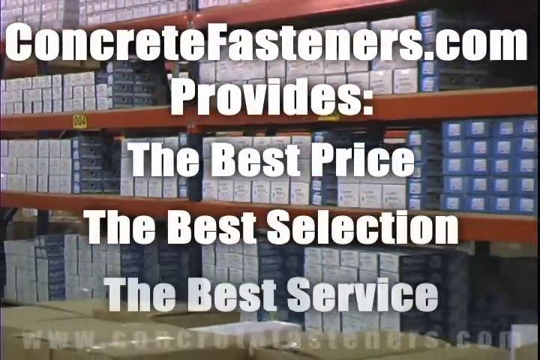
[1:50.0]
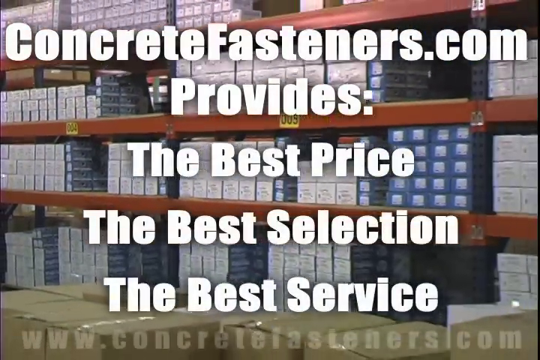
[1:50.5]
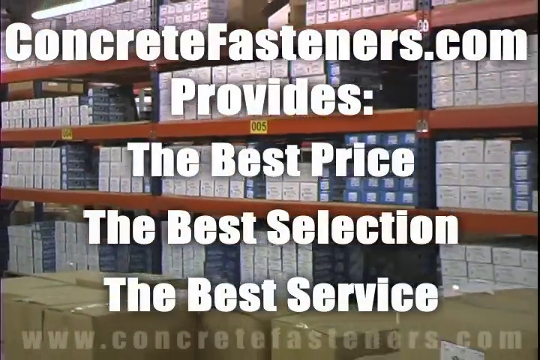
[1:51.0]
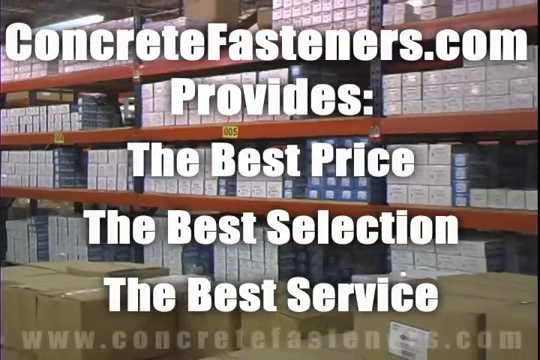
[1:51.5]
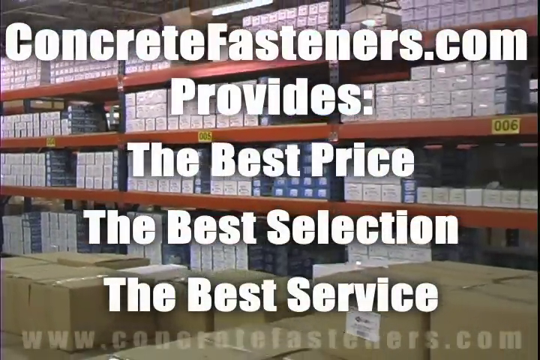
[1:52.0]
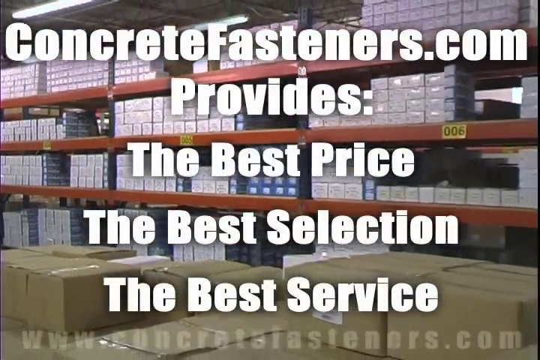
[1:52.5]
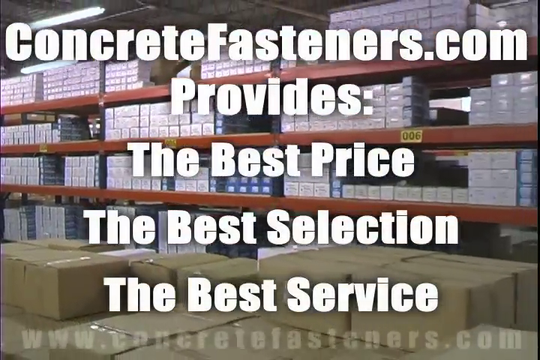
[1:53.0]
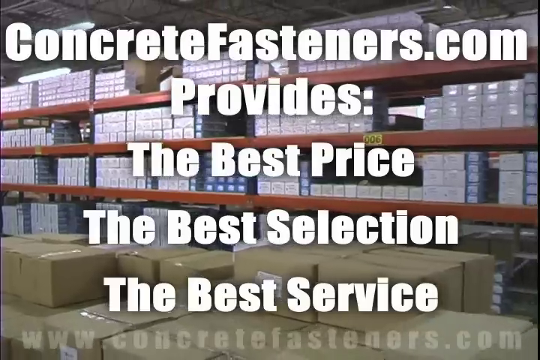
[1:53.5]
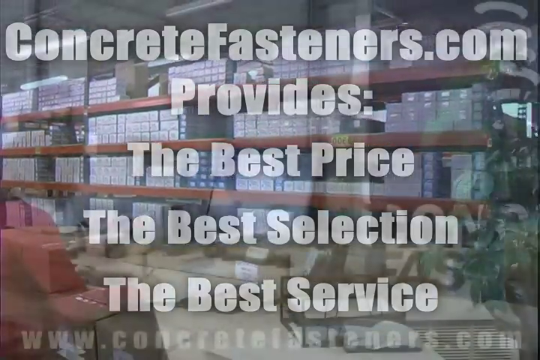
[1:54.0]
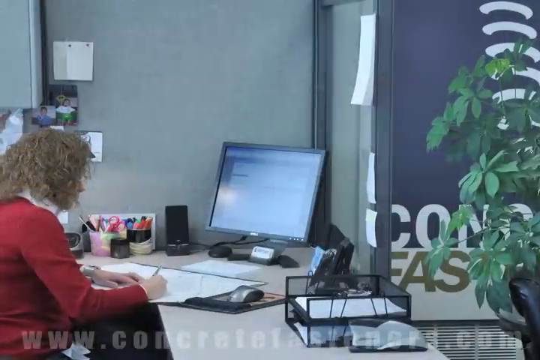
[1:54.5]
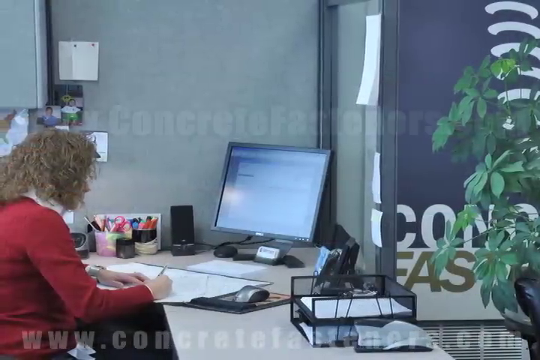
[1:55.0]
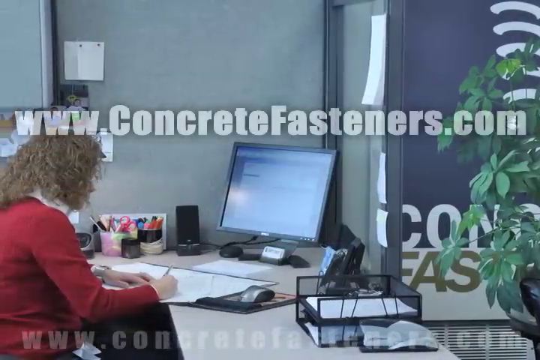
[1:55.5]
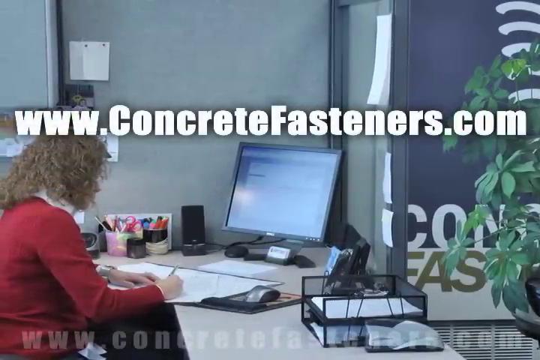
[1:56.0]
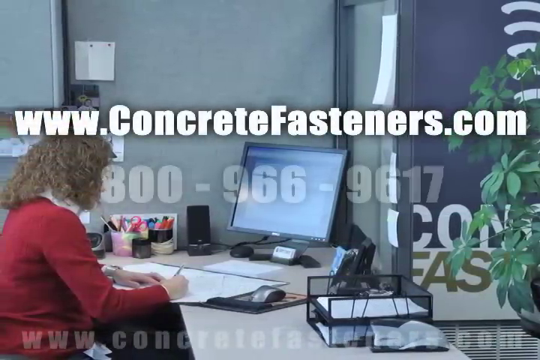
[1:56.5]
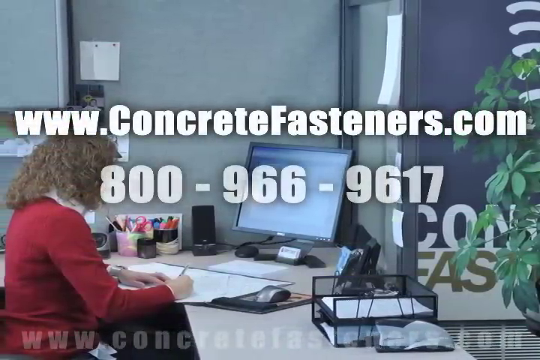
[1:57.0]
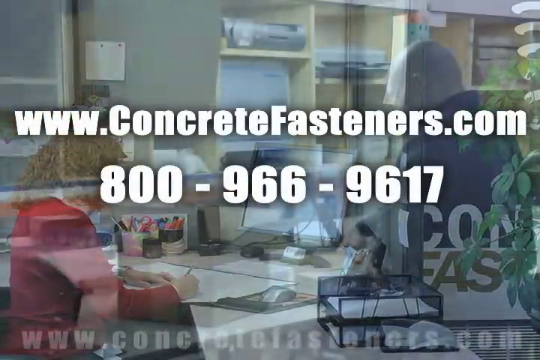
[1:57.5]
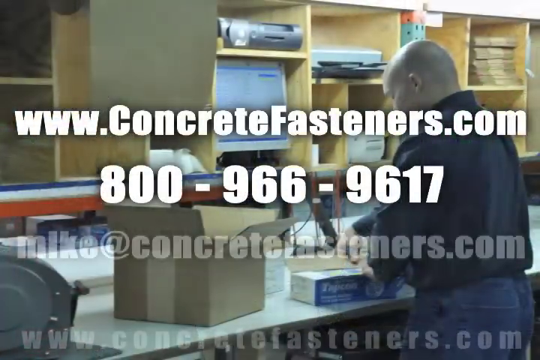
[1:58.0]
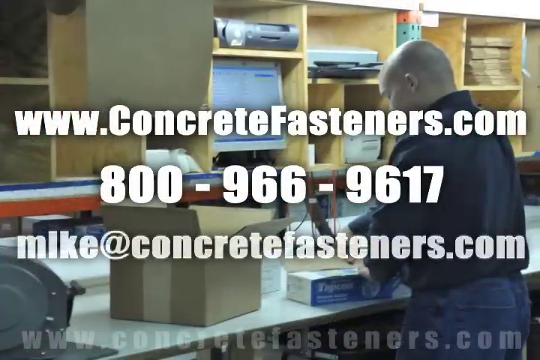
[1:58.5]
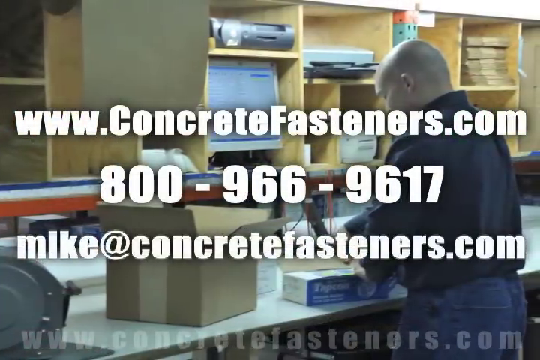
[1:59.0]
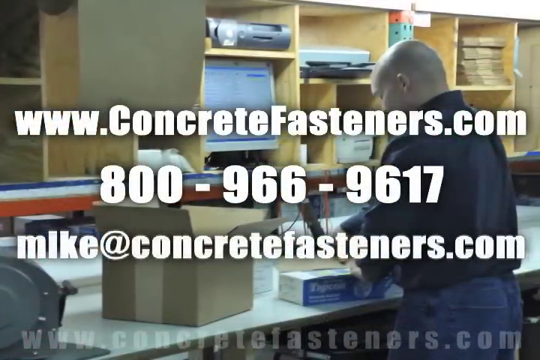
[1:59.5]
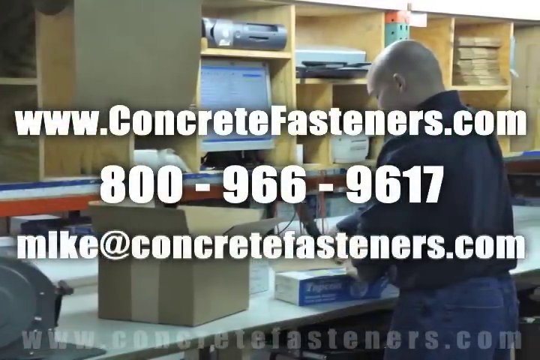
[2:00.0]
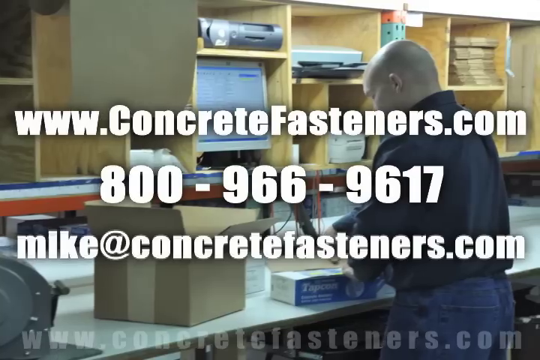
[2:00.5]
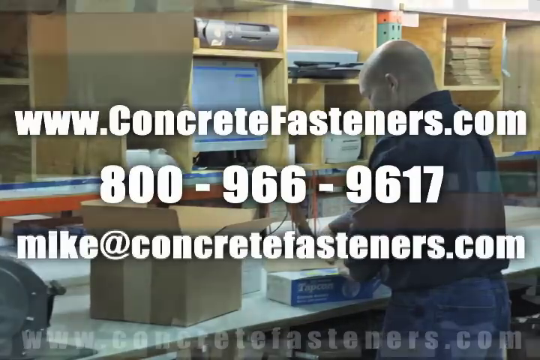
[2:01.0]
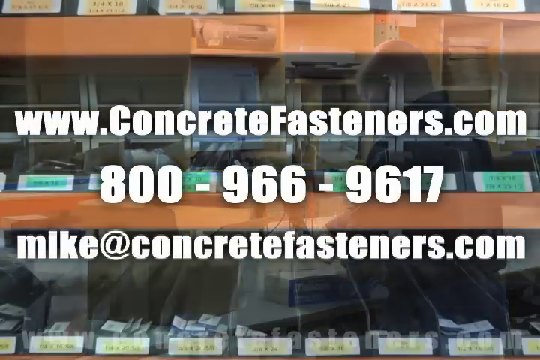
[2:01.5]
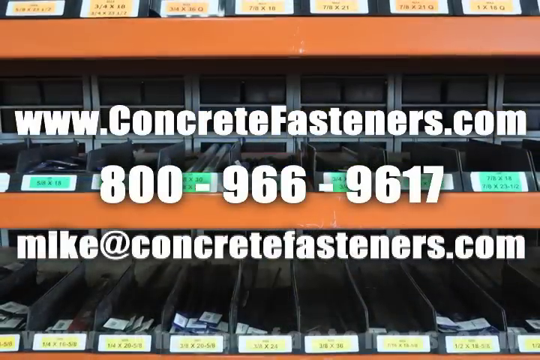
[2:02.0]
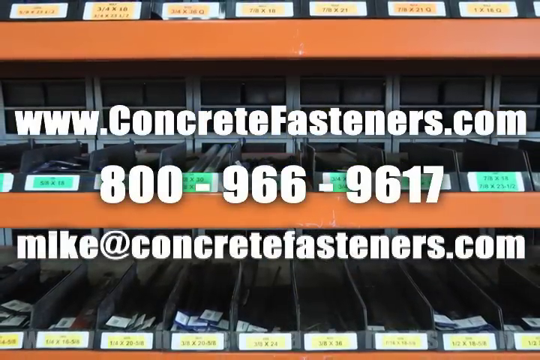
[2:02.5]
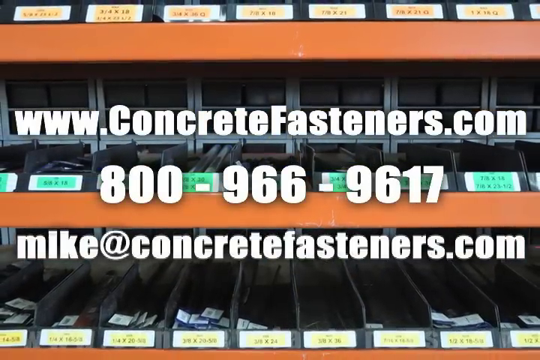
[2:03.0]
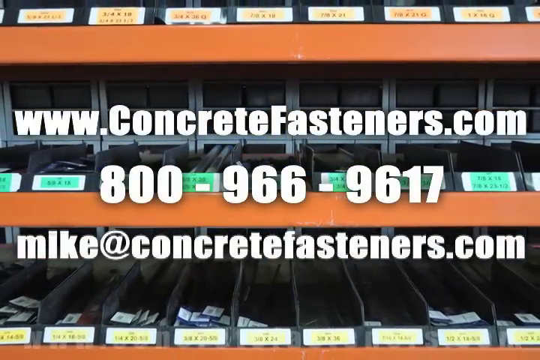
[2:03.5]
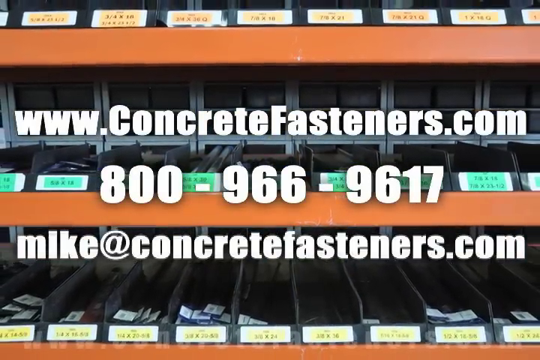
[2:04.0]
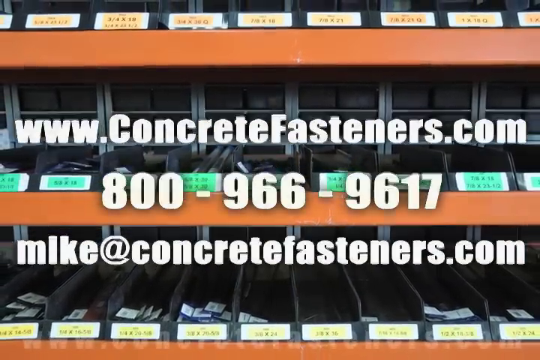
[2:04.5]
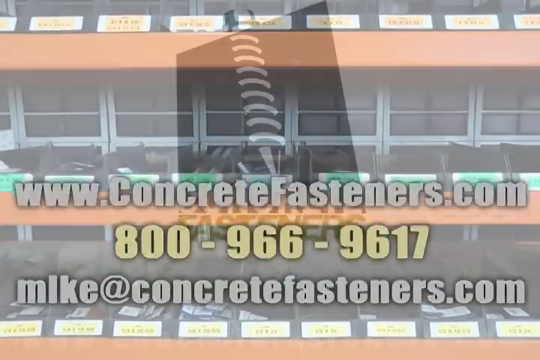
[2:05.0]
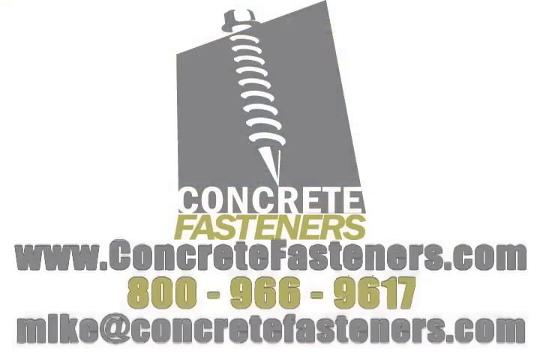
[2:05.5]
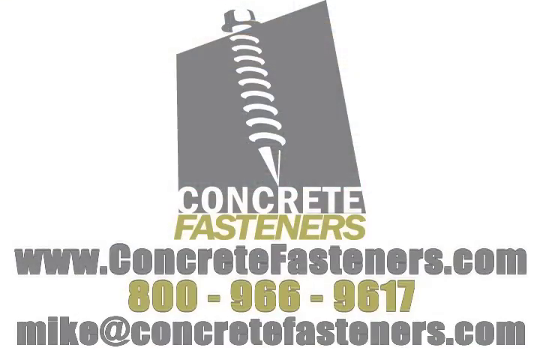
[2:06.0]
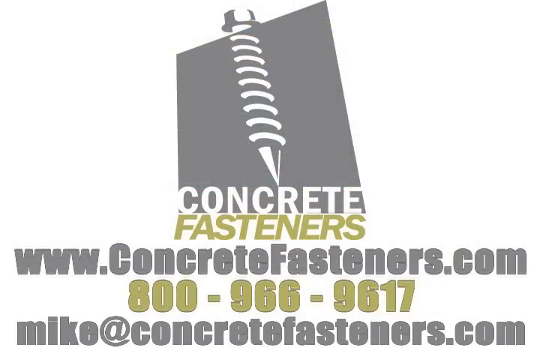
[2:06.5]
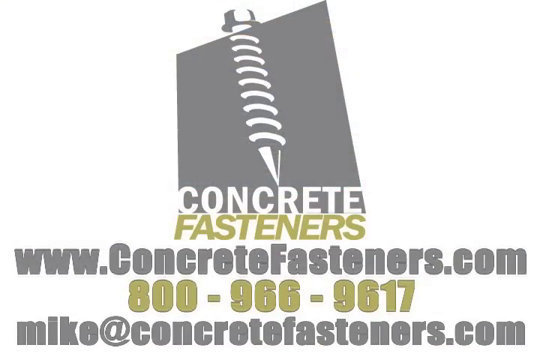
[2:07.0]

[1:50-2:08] An advertisement for Concrete Fasteners shows how to contact the company through its website, phone number and email. A couple of photos of different sleeve anchors follow. At the end of the video, the company logo appears: apparently a grey logo with a white and grey sleeve anchor going into concrete. At the bottom it says "concrete fasteners," with "concrete" in white and "fasteners" in yellow, and below that are the website, phone number and email.